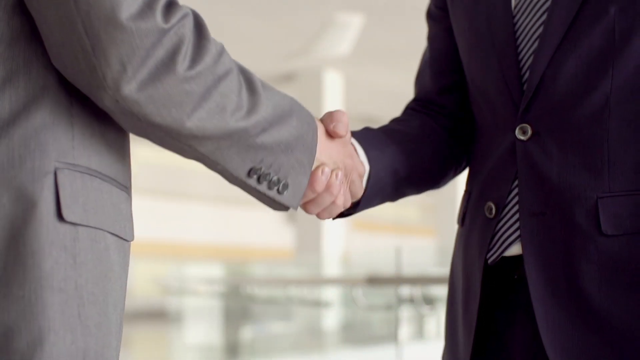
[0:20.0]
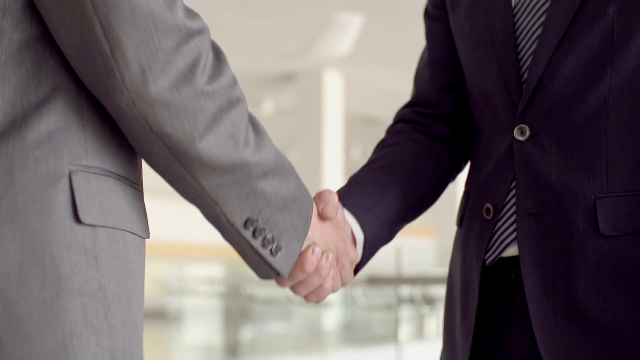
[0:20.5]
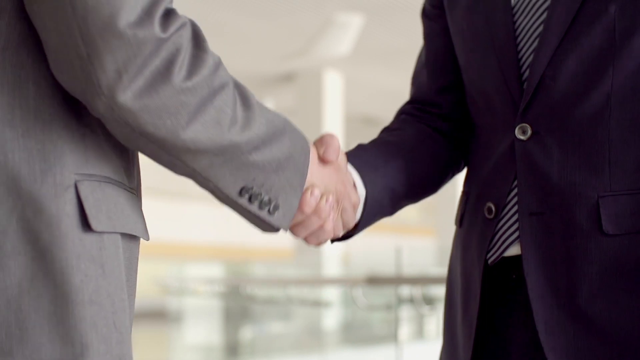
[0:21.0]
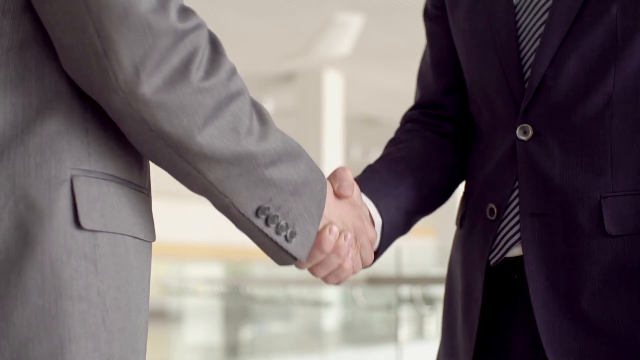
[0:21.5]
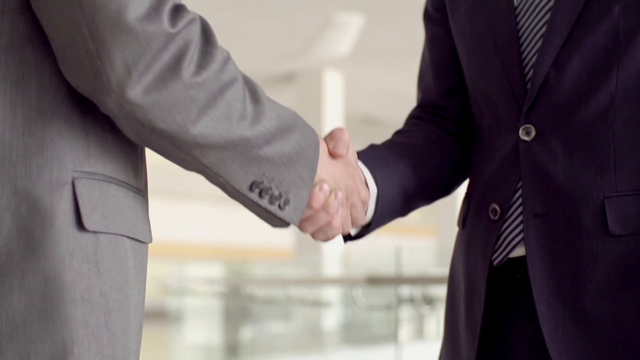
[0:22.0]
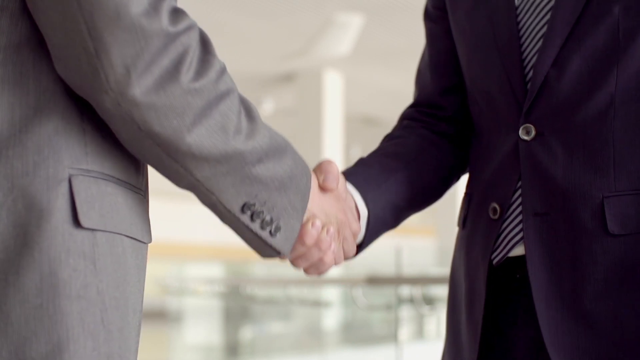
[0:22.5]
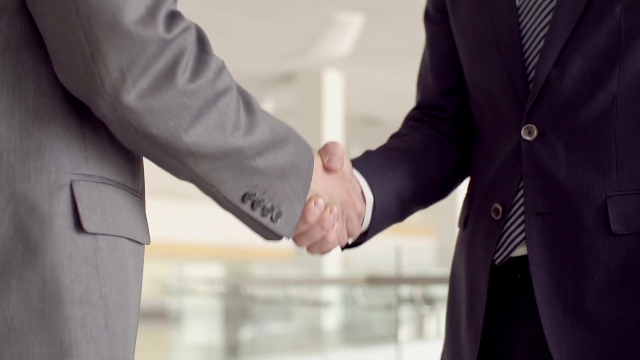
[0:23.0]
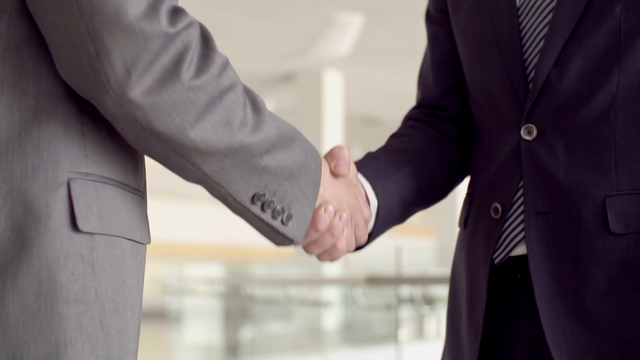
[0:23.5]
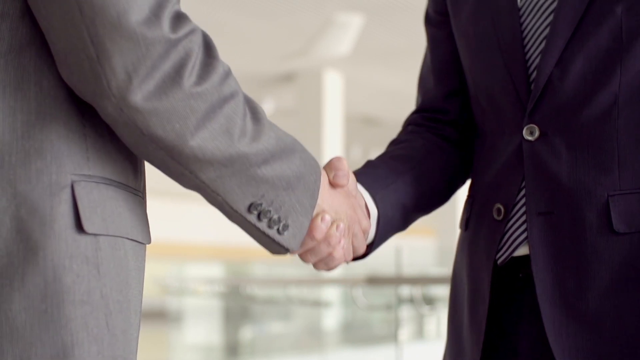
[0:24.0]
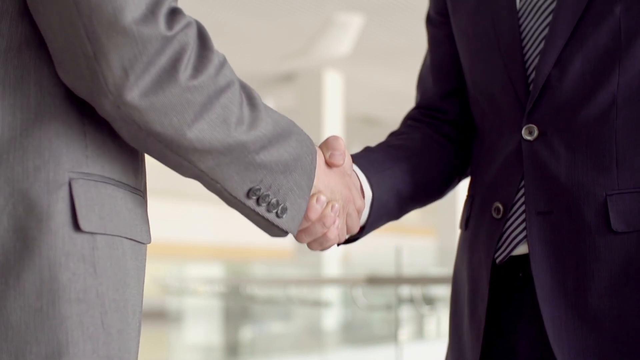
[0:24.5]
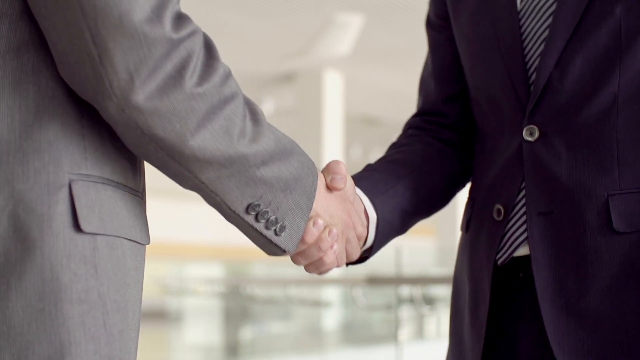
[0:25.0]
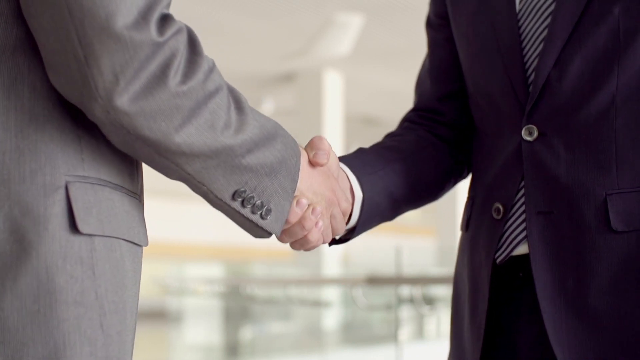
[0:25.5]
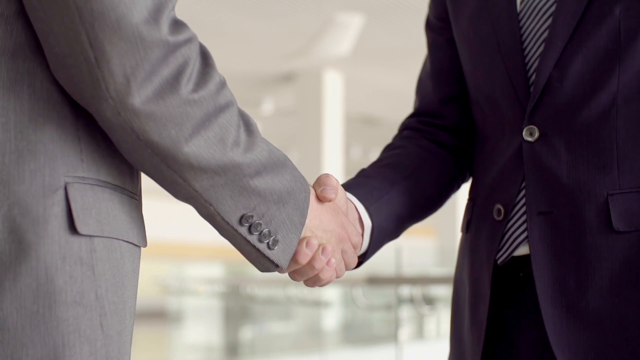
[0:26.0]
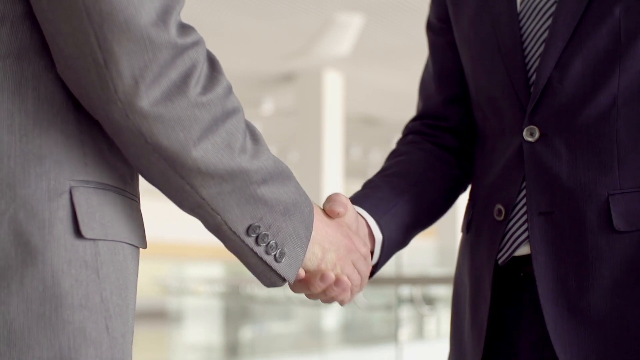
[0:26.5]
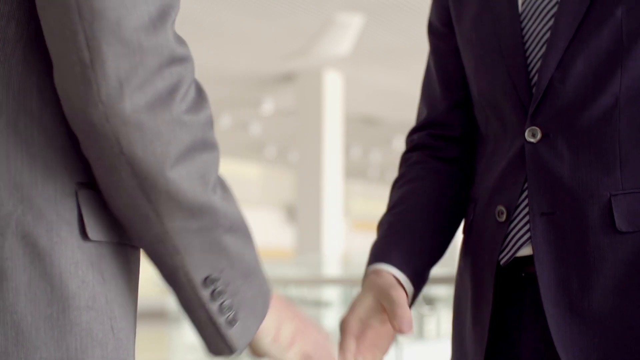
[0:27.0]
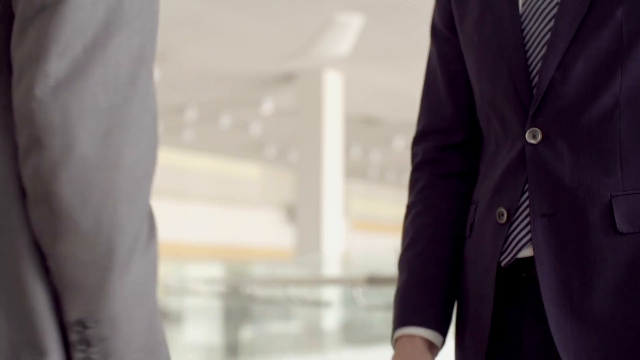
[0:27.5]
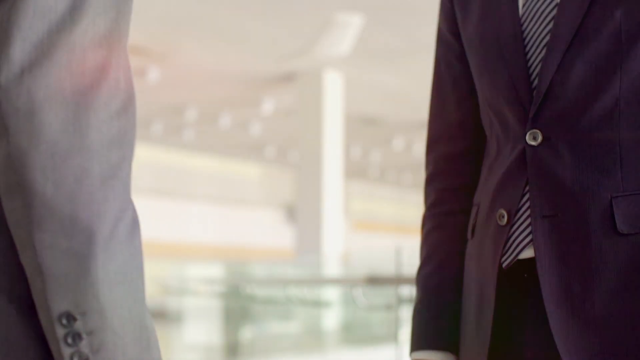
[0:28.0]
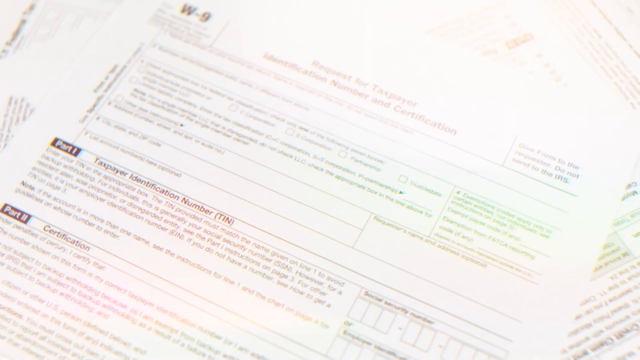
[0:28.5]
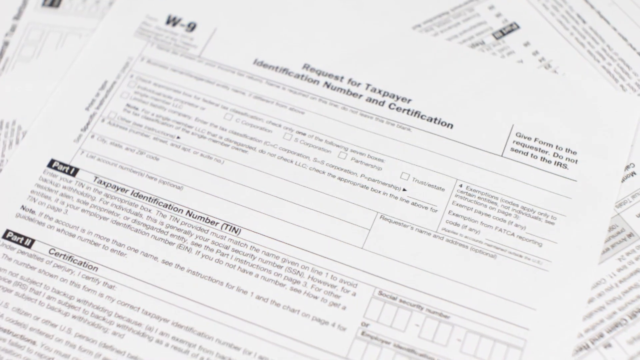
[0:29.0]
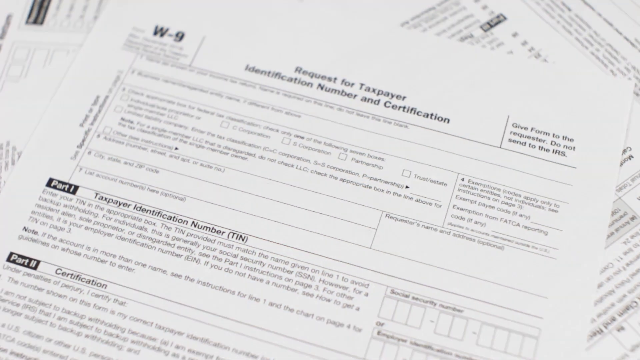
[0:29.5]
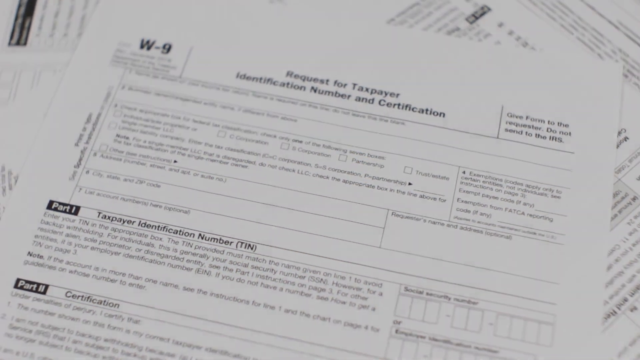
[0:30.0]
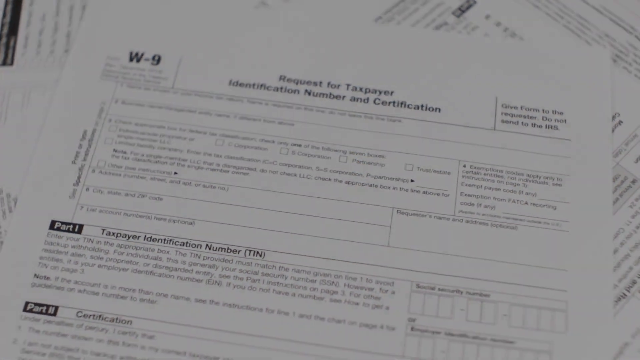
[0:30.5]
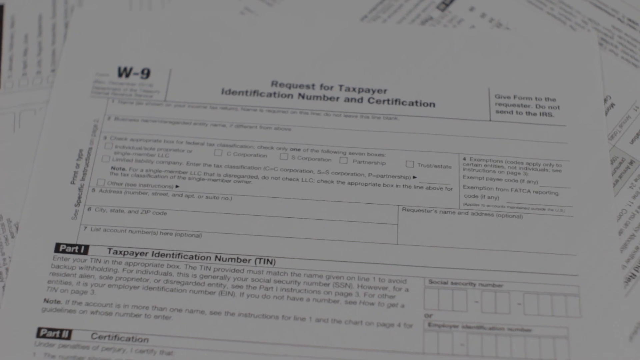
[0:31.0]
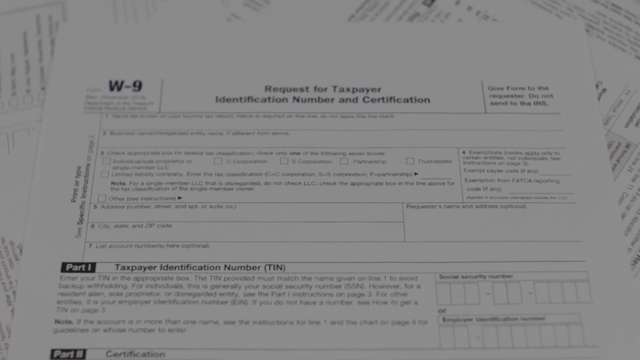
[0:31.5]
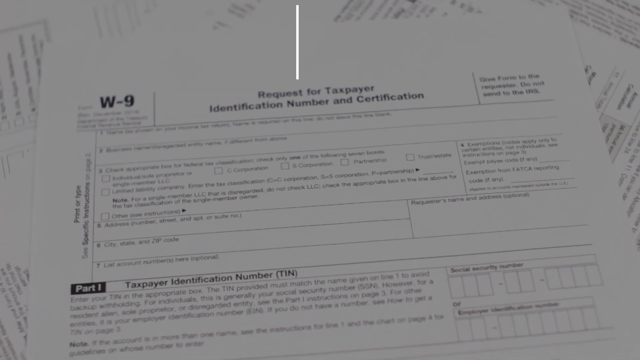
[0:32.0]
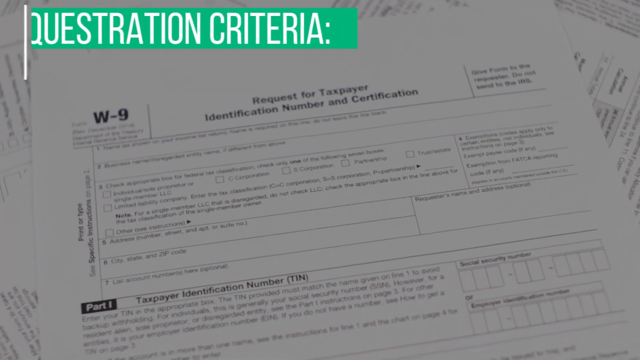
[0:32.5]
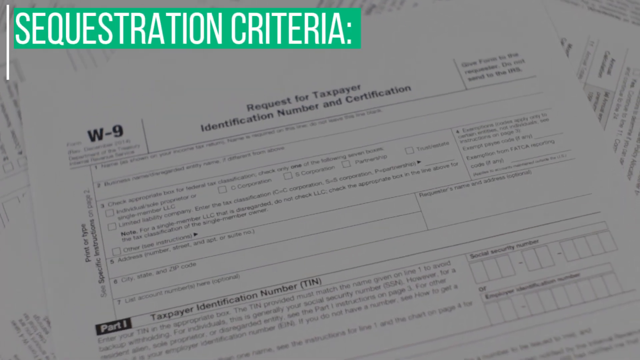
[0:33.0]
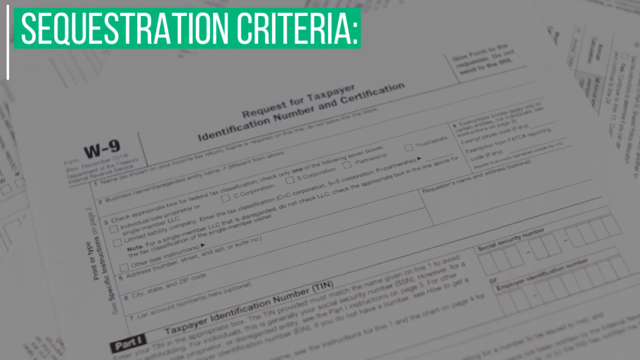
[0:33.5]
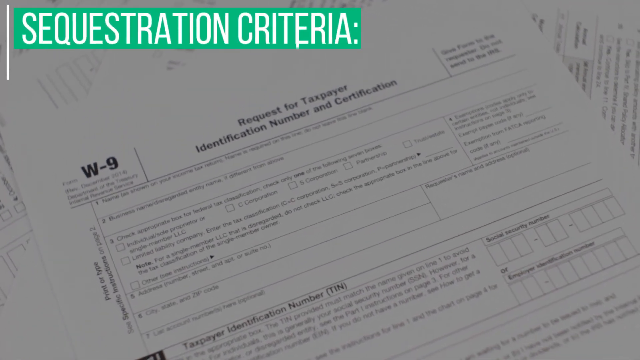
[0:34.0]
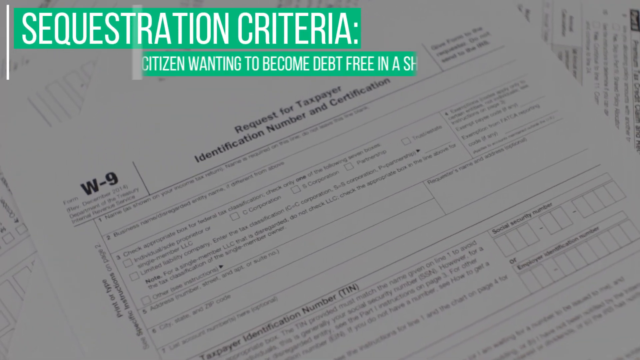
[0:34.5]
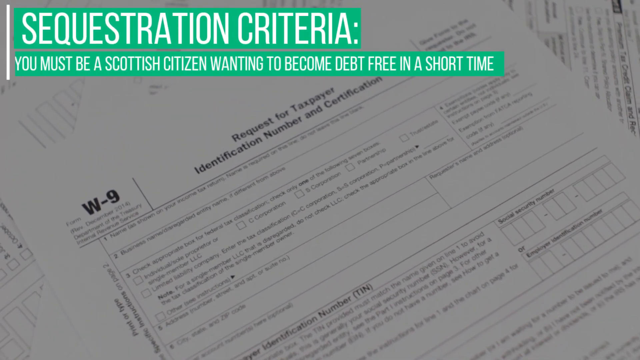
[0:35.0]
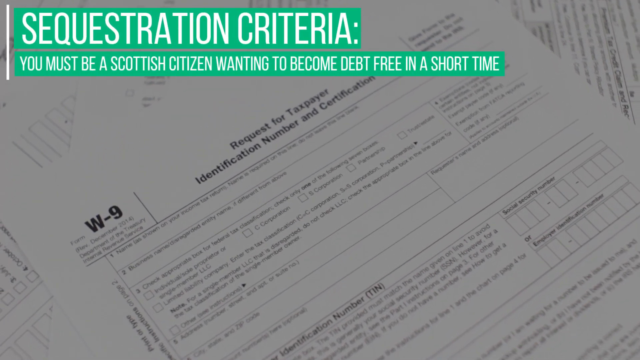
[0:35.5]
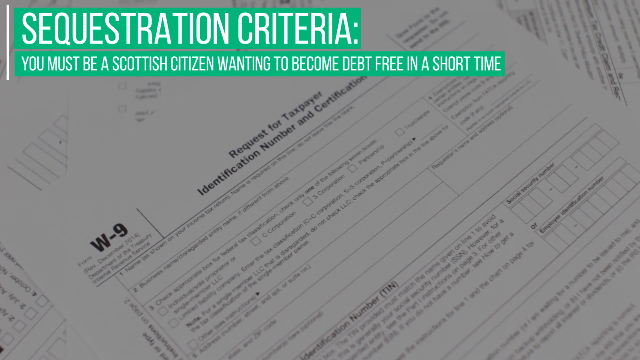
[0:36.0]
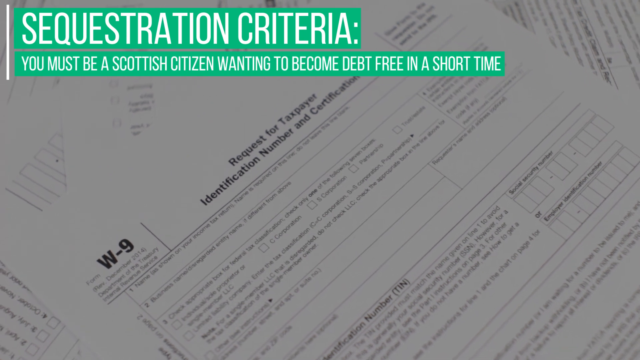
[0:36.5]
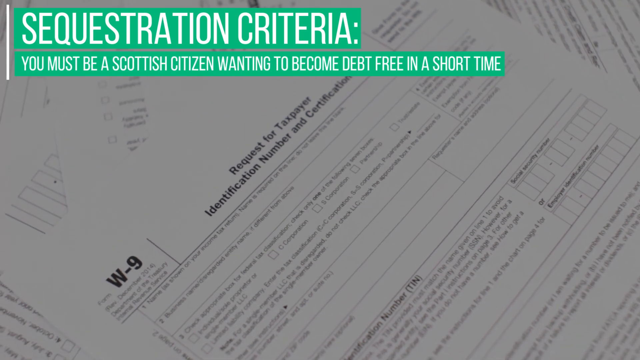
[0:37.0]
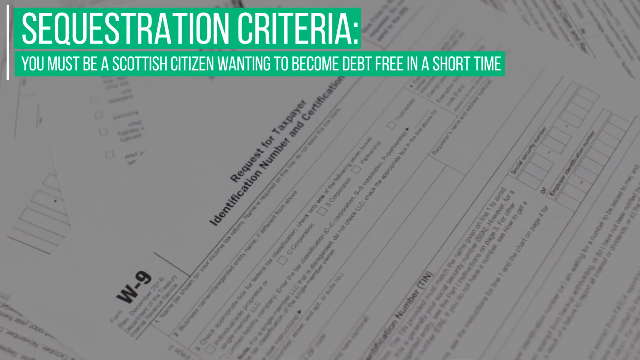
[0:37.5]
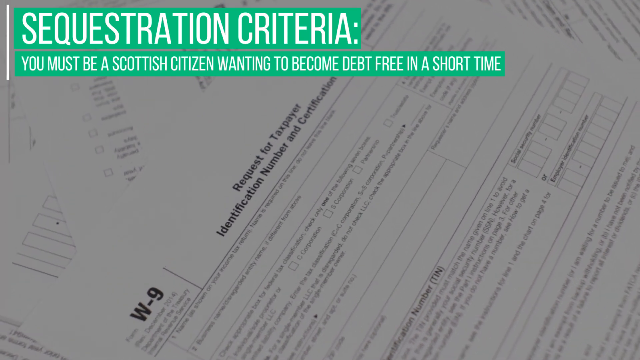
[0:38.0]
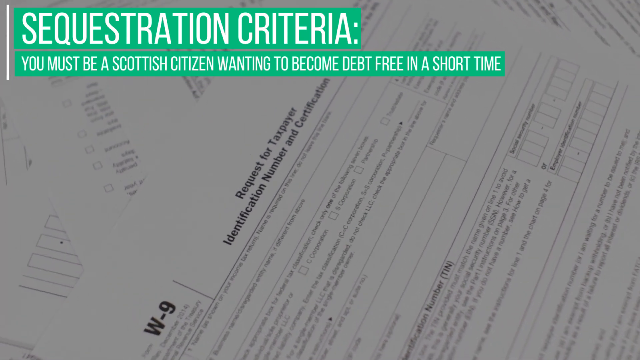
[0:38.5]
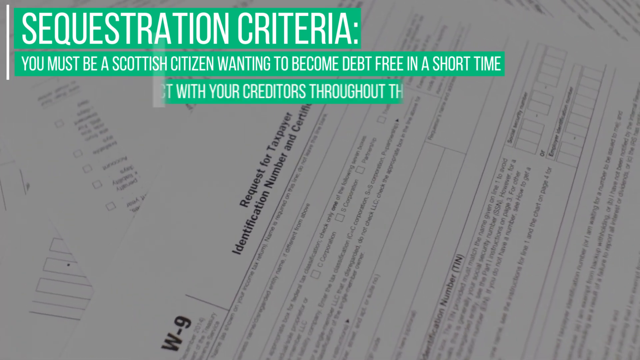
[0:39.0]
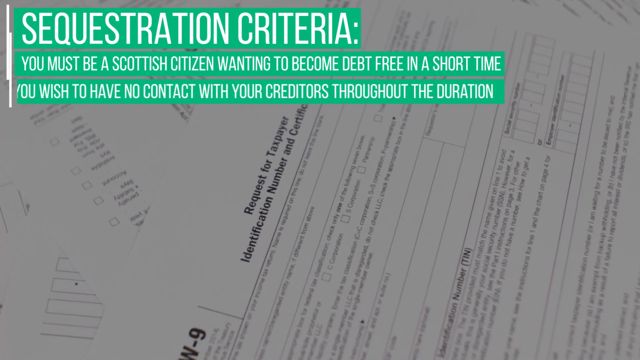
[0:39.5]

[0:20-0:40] Two men shake hands; one wears a gray suit and the other a dark blue suit with a striped tie. Next comes a stock image that circles or rotates, showing a W-9 form with the text "requests for taxpayers identification number certification", which is clearly an American form. Then on-screen text reads "sequestration criteria" and "You have to be a Scottish citizen wanting to become a debt-free in a short amount of time."